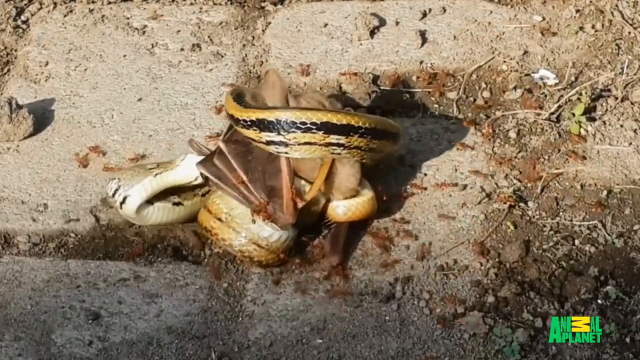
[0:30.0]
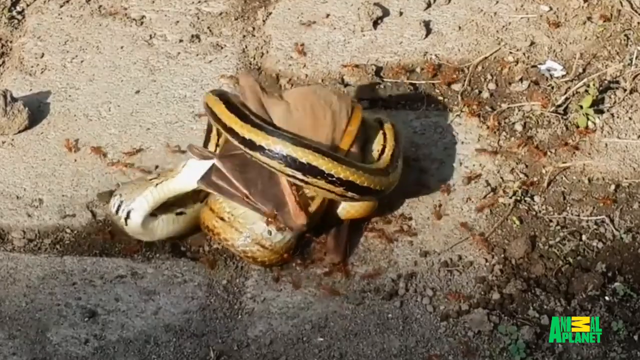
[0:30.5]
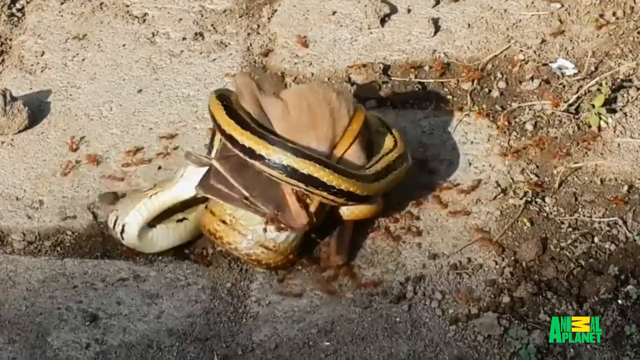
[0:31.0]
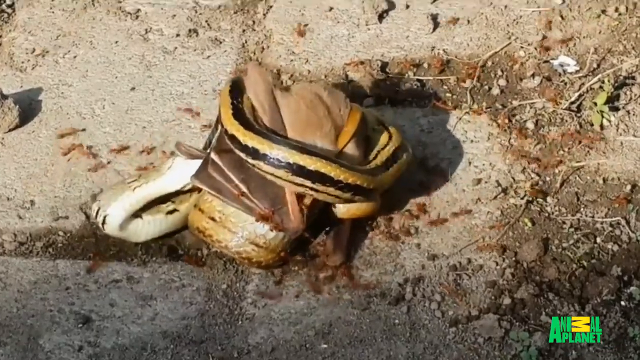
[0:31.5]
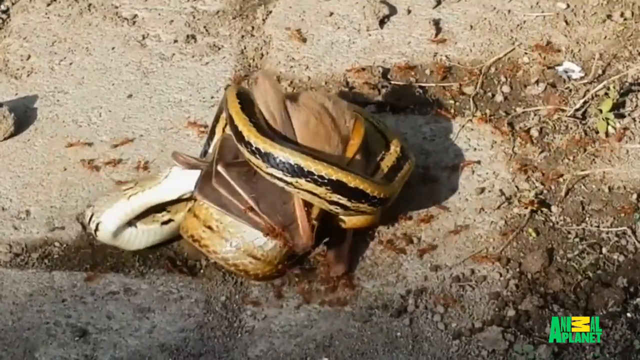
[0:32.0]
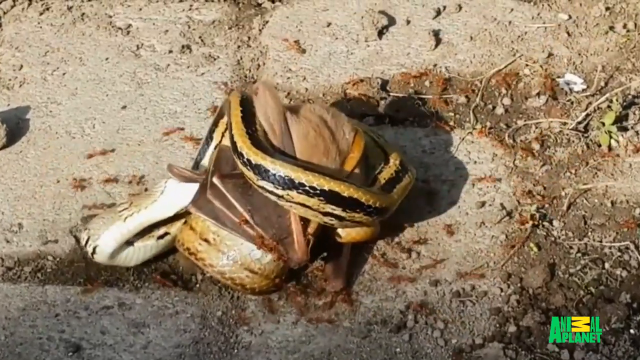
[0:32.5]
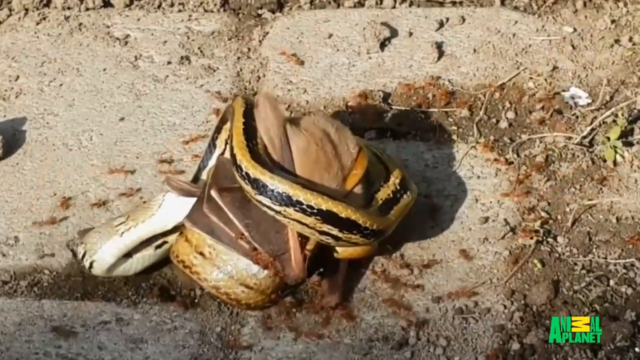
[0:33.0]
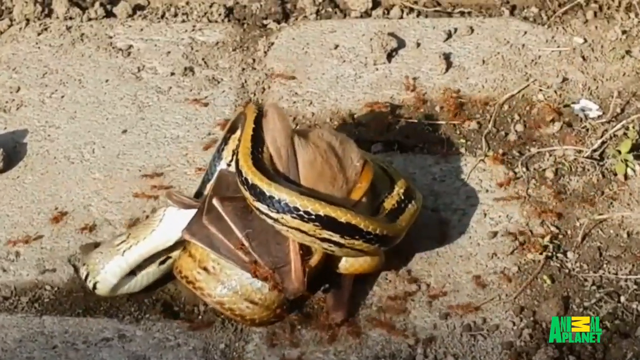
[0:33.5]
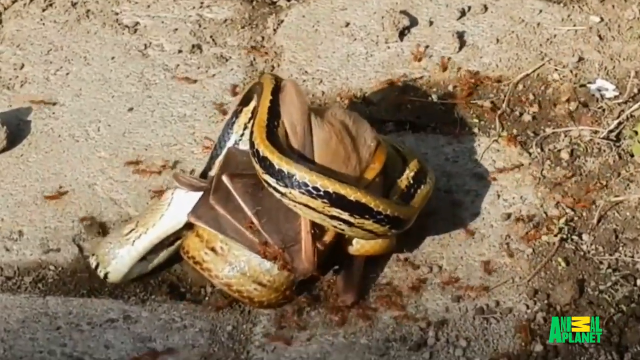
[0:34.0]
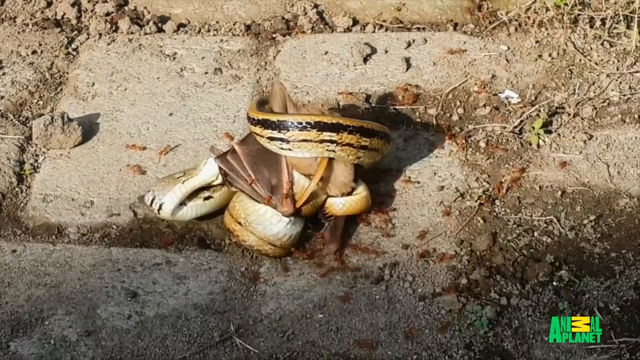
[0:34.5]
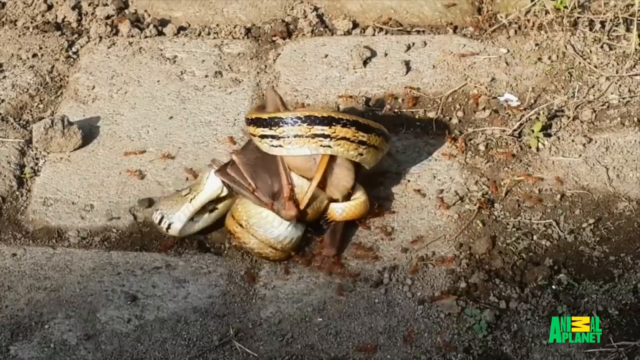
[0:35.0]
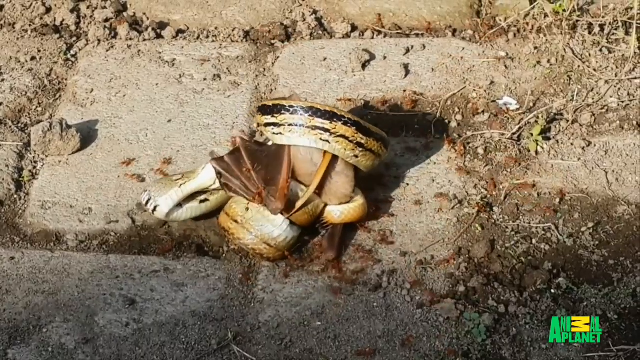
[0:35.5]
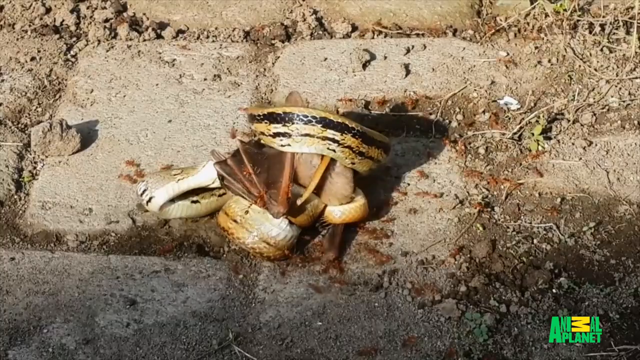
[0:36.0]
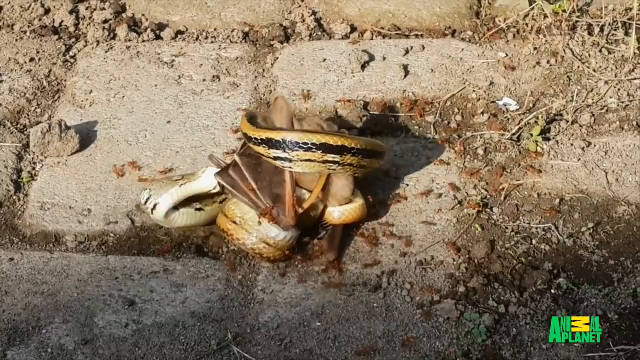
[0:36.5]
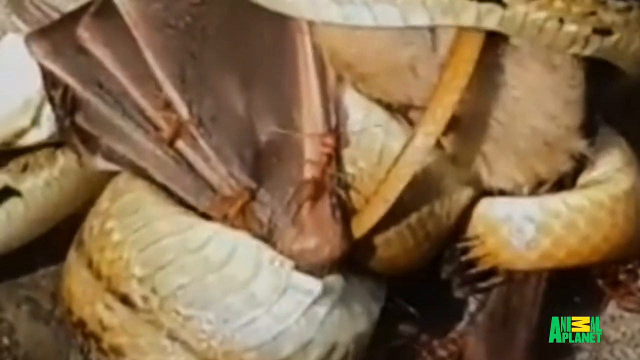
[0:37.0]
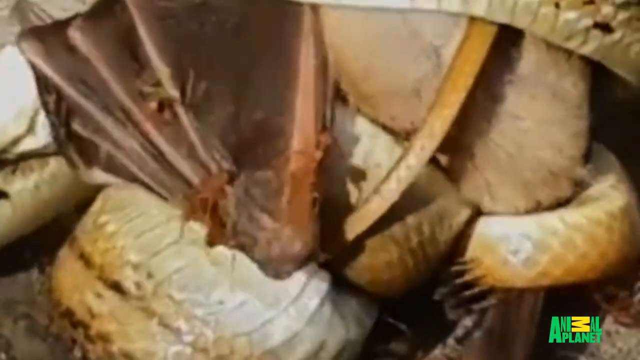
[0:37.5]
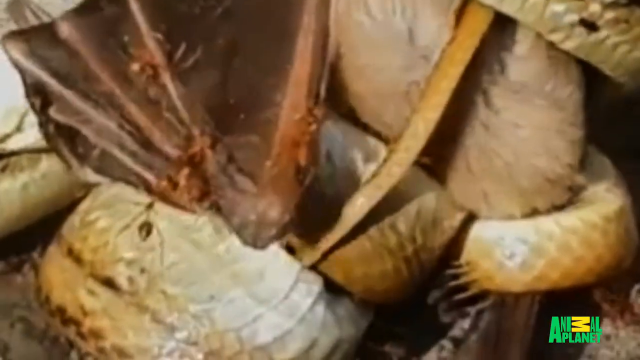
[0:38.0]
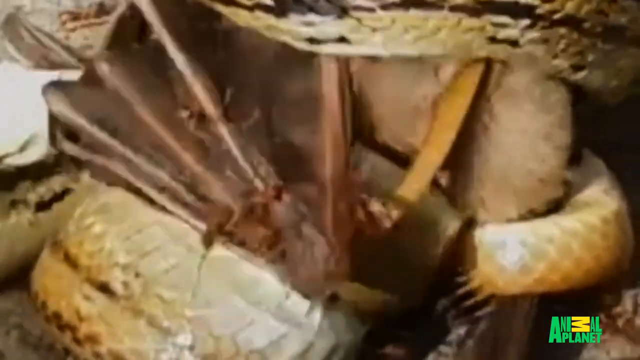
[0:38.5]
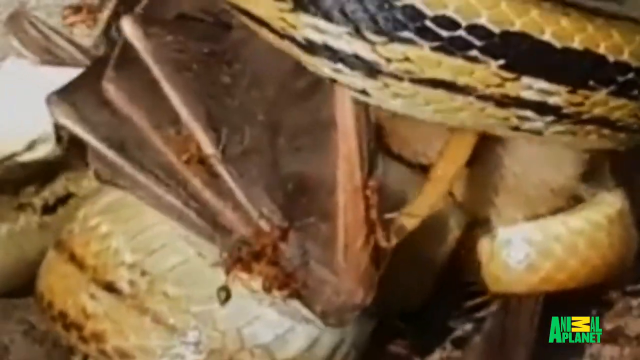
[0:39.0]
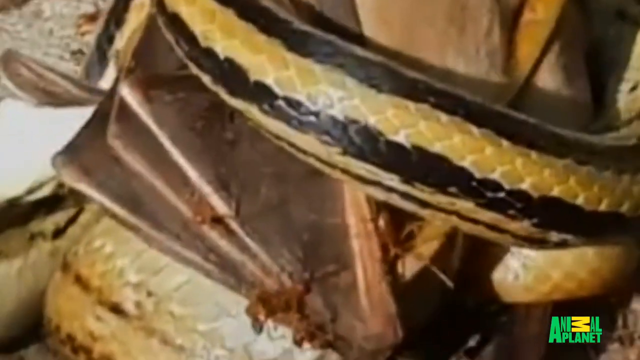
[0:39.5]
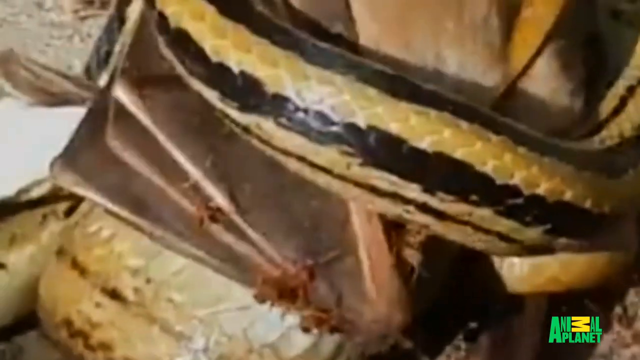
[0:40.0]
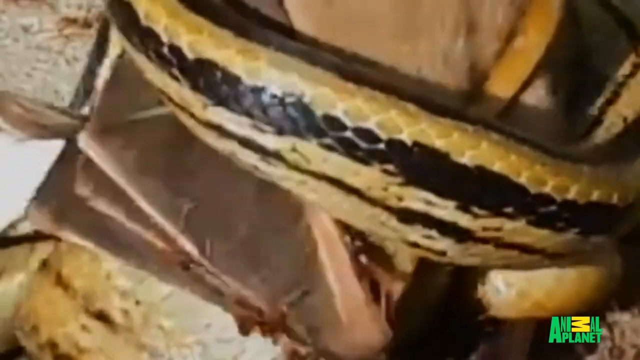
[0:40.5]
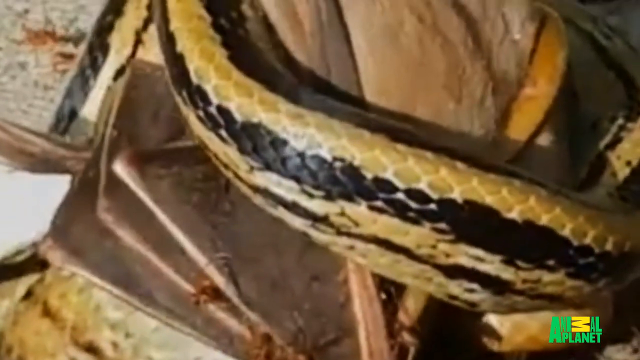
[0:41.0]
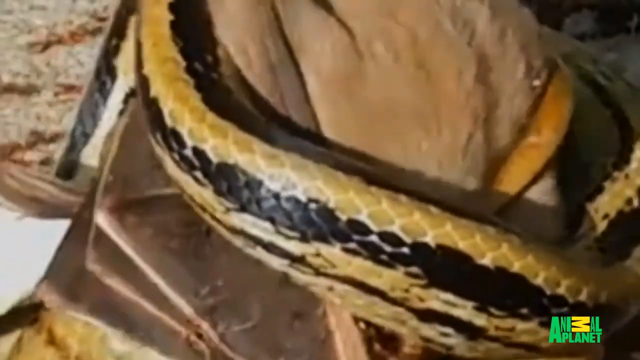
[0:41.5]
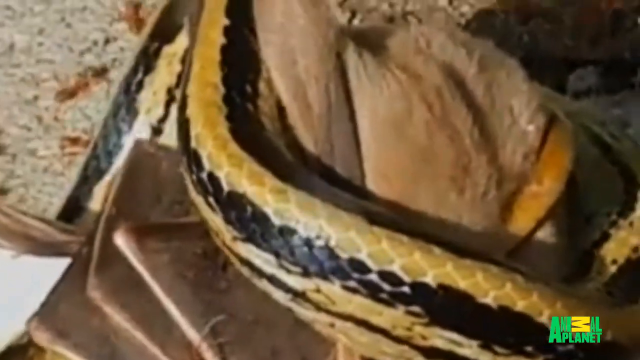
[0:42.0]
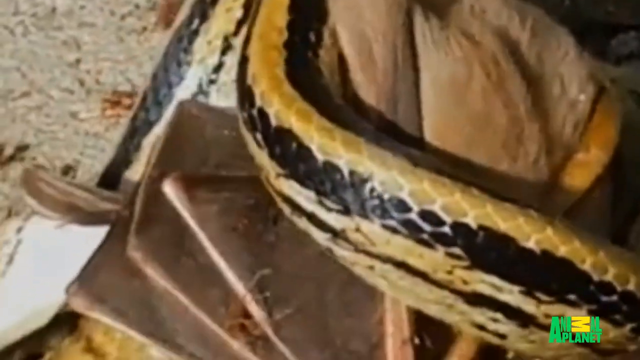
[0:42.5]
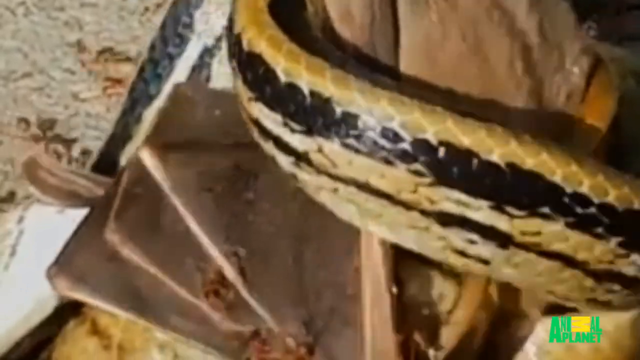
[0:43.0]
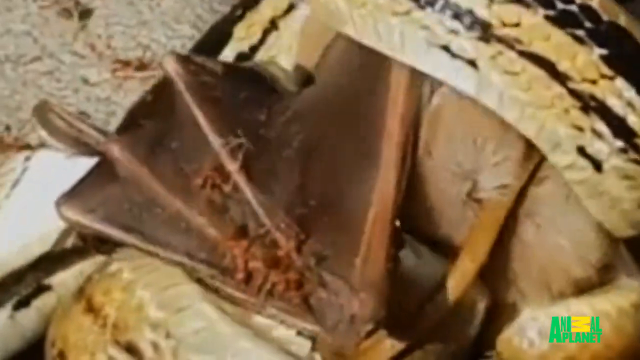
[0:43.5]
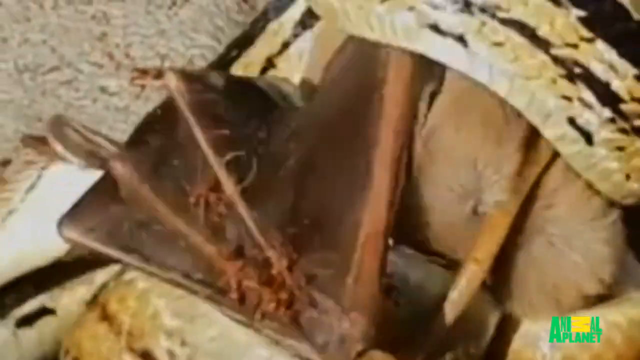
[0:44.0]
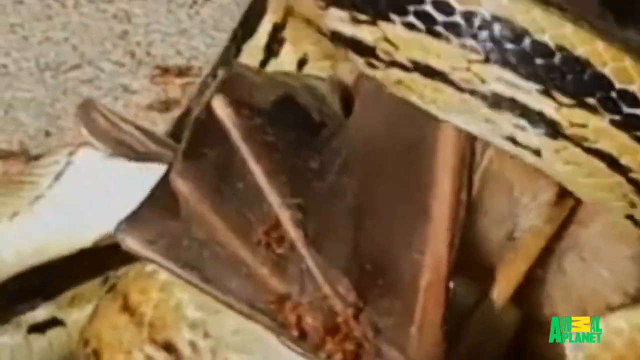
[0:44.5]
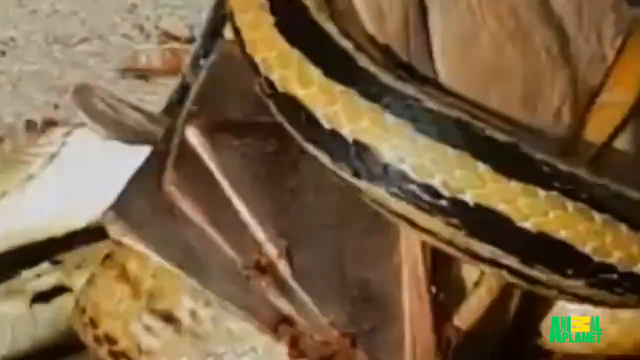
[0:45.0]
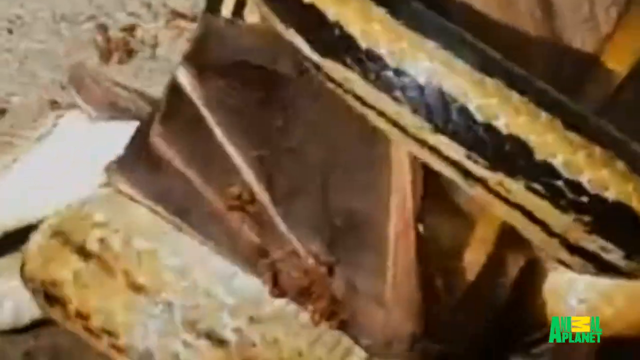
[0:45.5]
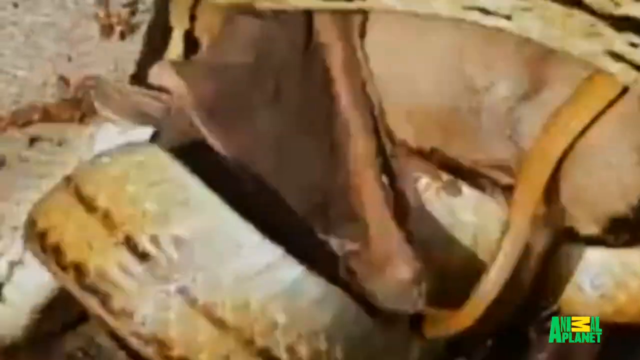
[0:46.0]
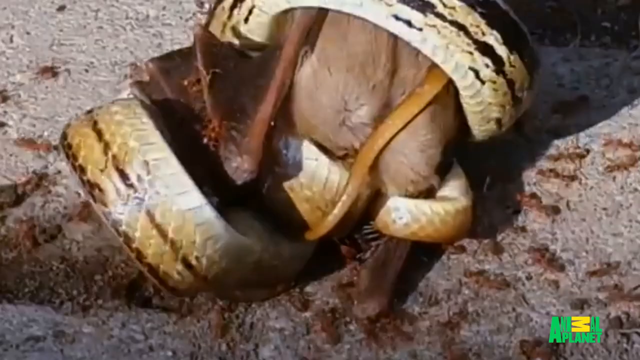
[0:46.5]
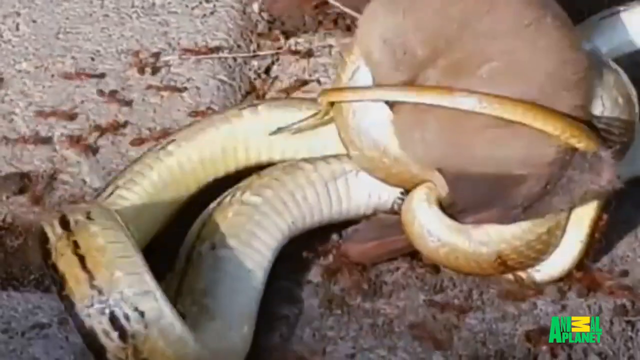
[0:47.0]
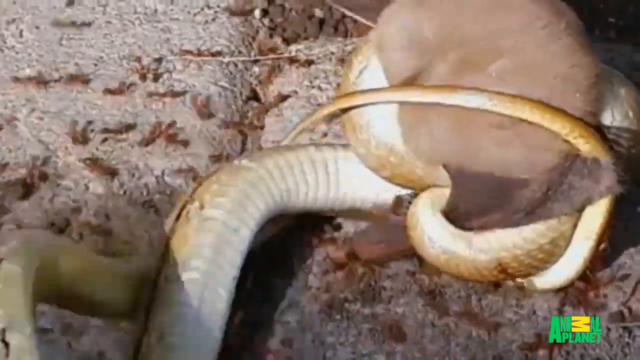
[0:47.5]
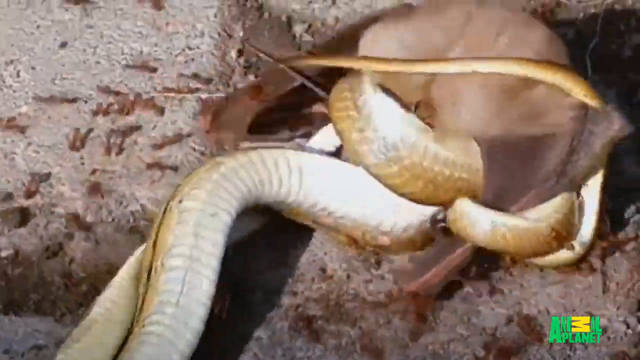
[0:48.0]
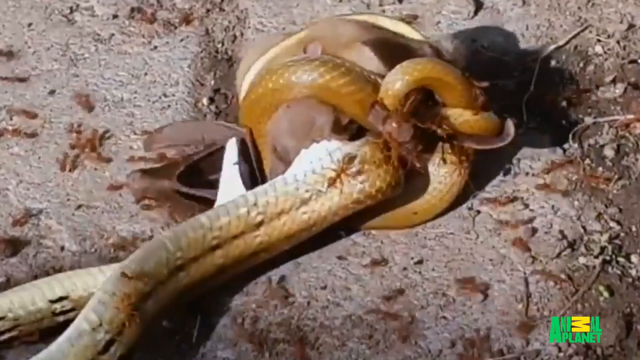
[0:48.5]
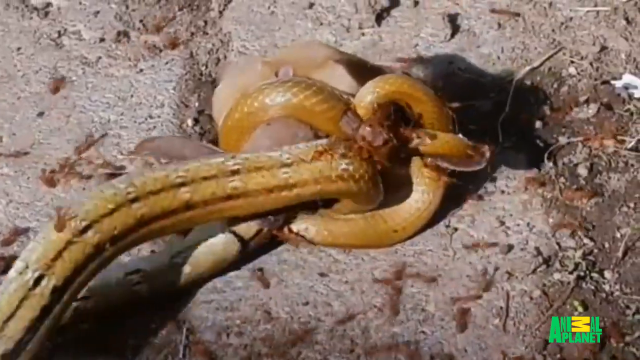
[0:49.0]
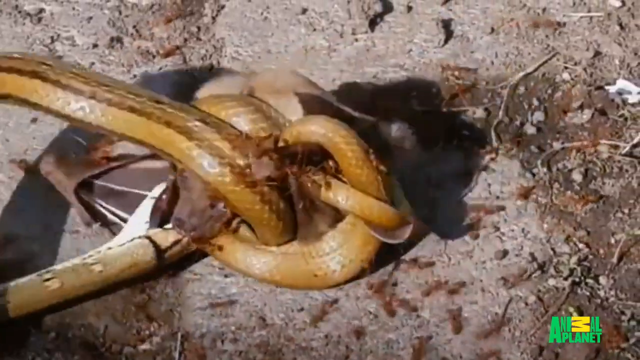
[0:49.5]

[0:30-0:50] A ton of red and brown ants crawl around a single black ant in the middle and appear to be killing it. The video goes back to the middle-aged man giving the interview, who has sandy blonde hair and wears a dark brown shirt. A close-up shows the ants chewing on the single black ant; they appear to have red bodies with a black tail. It then cuts back to the snake trying to eat the bat, and they roll around on the bricks.